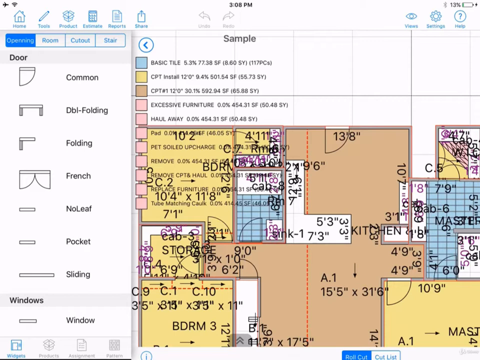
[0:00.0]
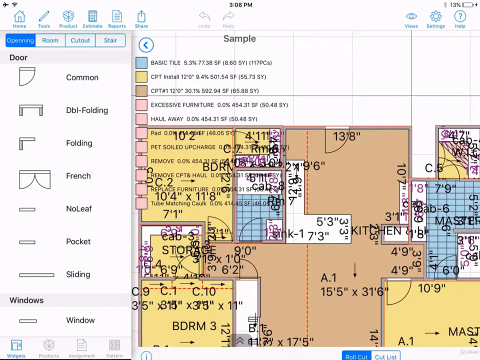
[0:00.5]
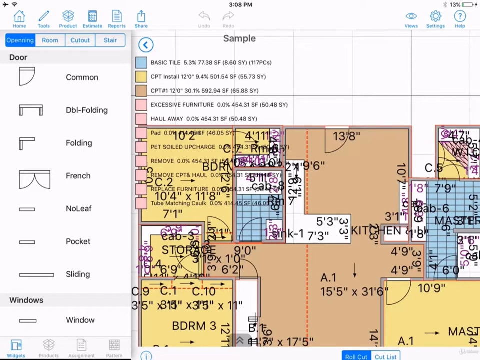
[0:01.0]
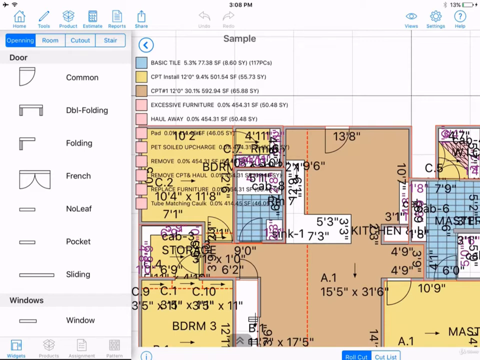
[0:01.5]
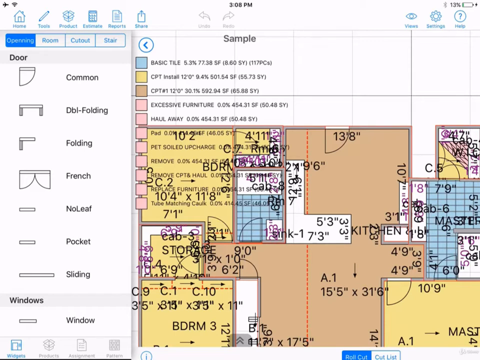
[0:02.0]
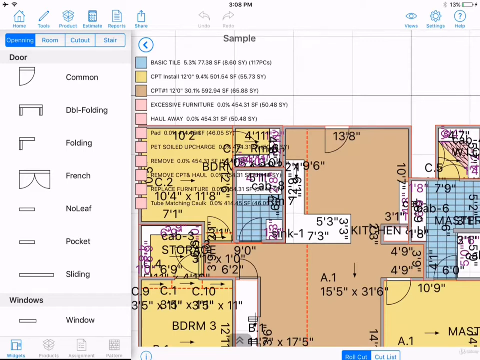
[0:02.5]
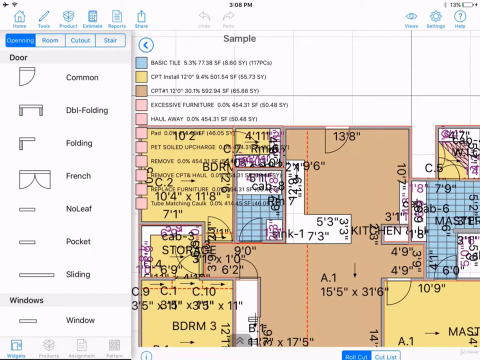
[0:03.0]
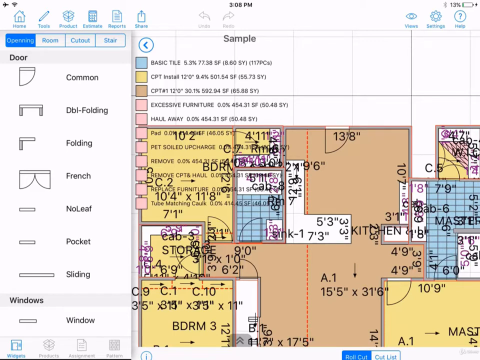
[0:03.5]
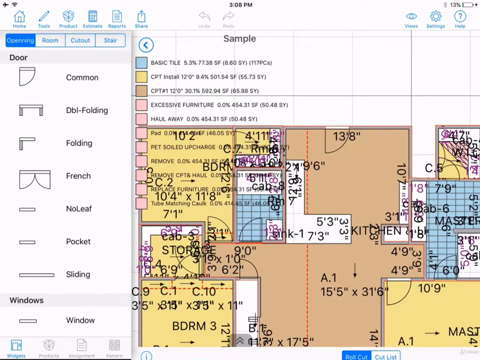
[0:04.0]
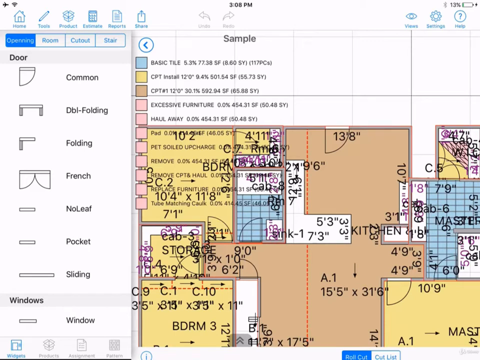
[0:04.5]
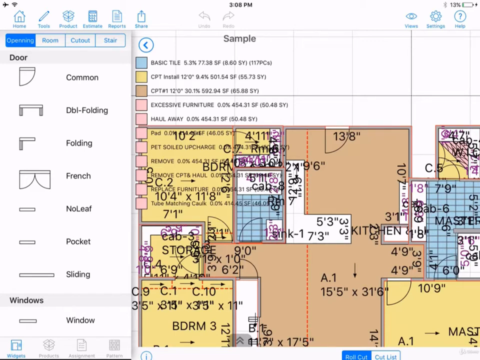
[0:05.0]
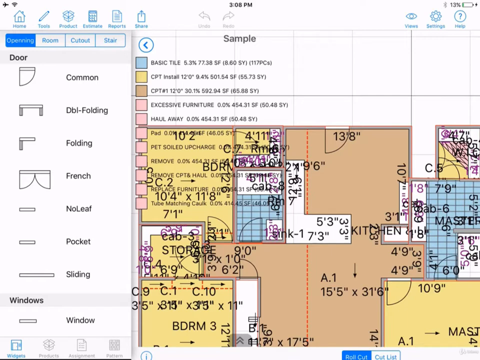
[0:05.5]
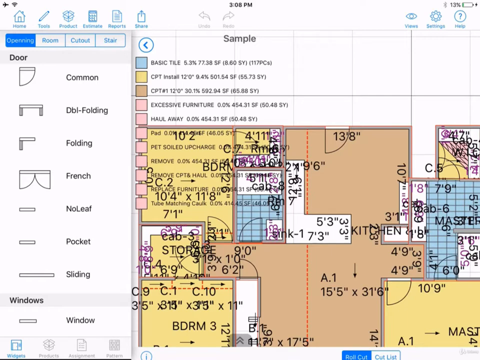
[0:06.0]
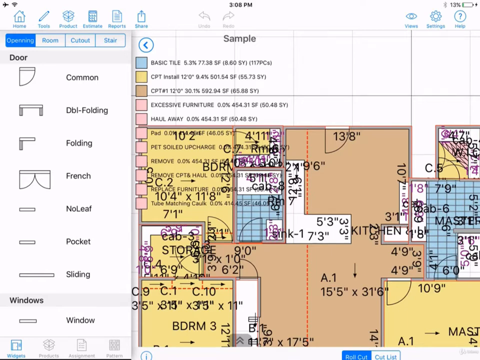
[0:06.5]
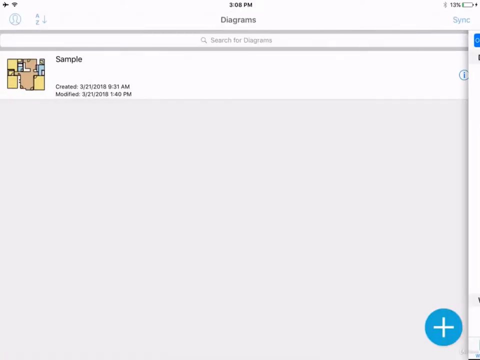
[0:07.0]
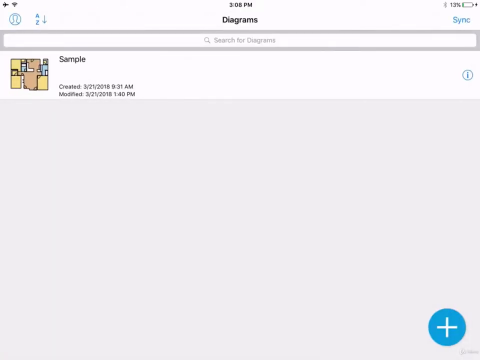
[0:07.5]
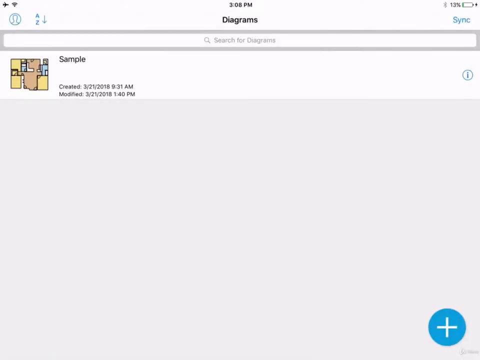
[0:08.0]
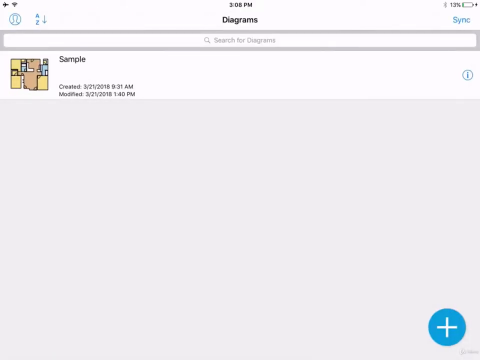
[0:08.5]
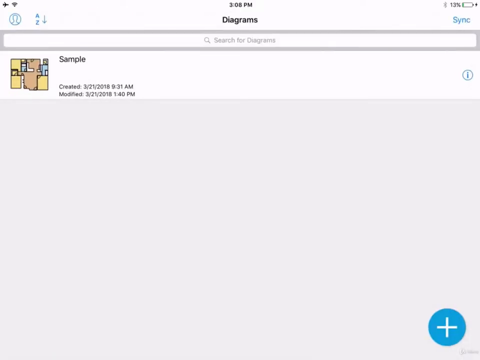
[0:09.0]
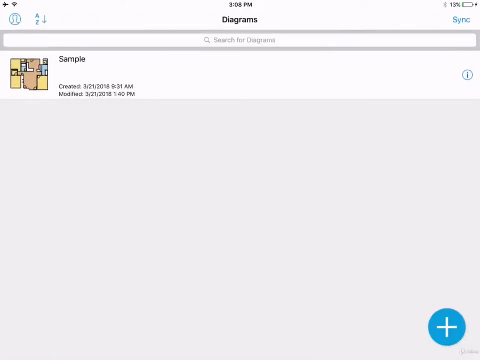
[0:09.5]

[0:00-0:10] A floor plan appears to be shown, moving back and forth. It displays the actual floor plan with measurements included, along with a small scale window explaining symbols for windows such as double folding, folding French, pocket, and sliding. The view moves to a sample screen and then back to the floor plan. Different colors stand for different things: blue means basic tile, yellow is CPT install, brown is CPT with different numbers, and pink is excessive furniture. A building with a sample floor plan appears to be shown, but the view quickly returns to the original floor plan. Across the top are the options home, tools, product, estimate, reports, and share. It appears to be a program for building or choosing a house.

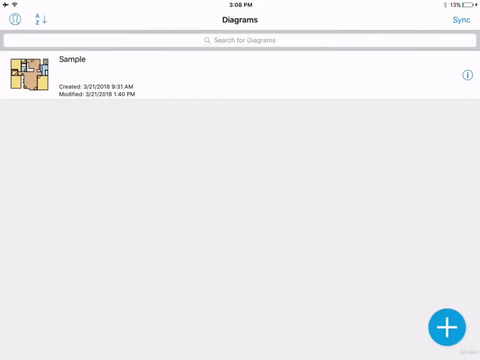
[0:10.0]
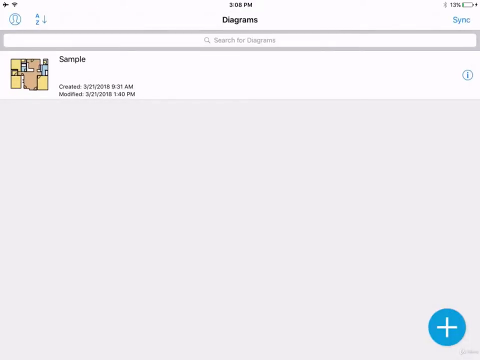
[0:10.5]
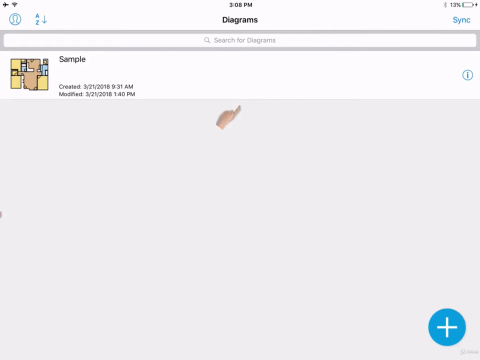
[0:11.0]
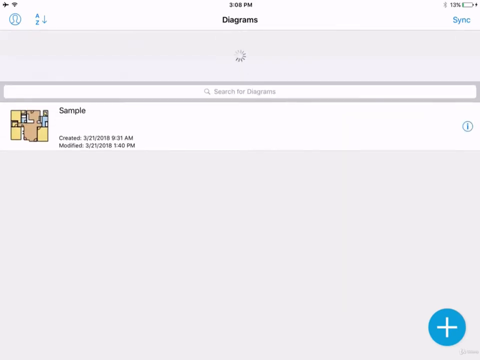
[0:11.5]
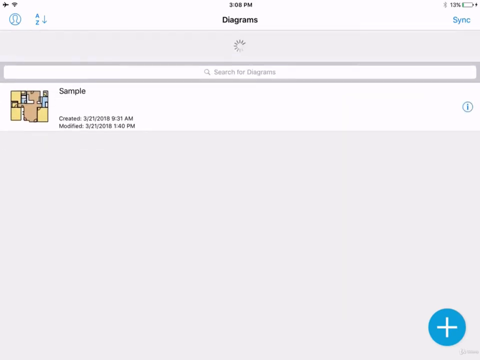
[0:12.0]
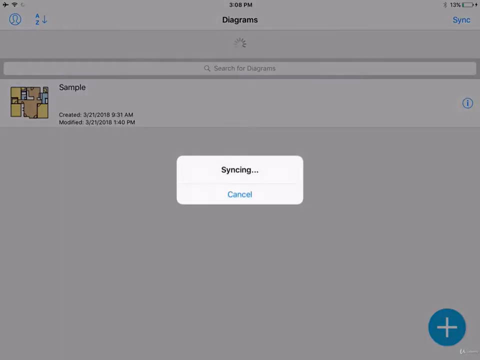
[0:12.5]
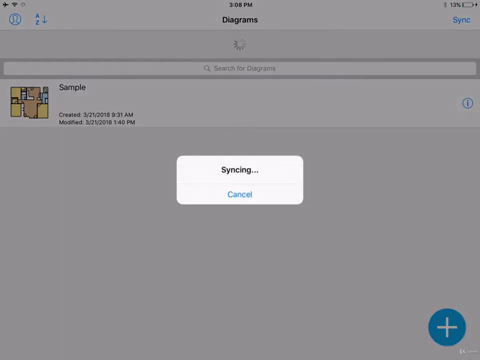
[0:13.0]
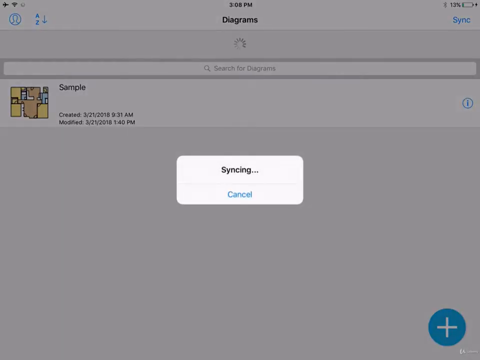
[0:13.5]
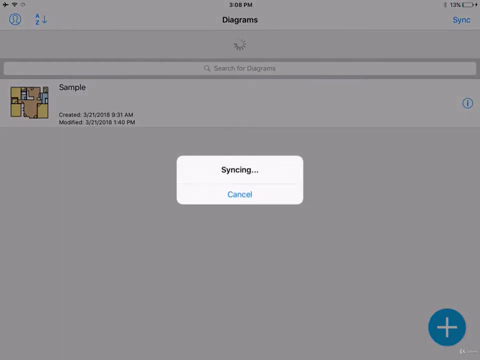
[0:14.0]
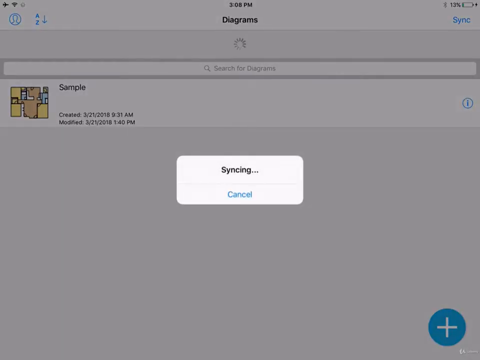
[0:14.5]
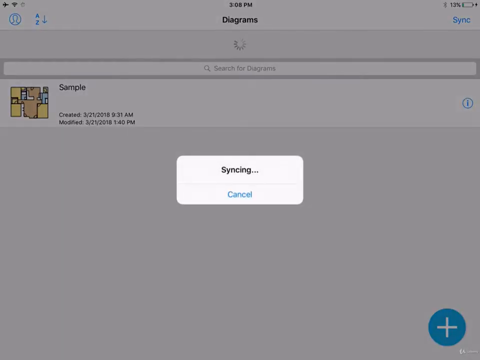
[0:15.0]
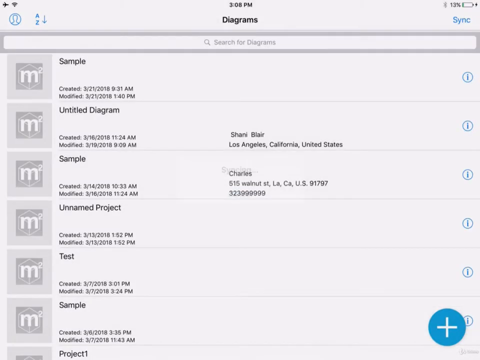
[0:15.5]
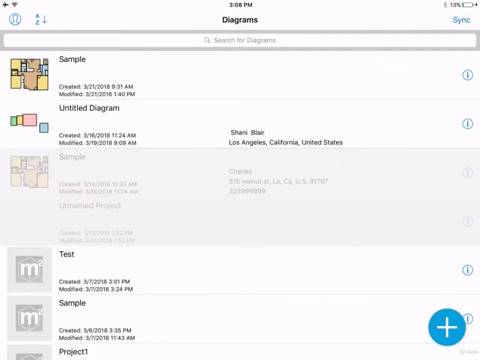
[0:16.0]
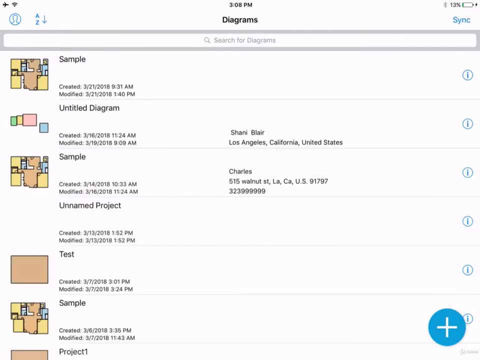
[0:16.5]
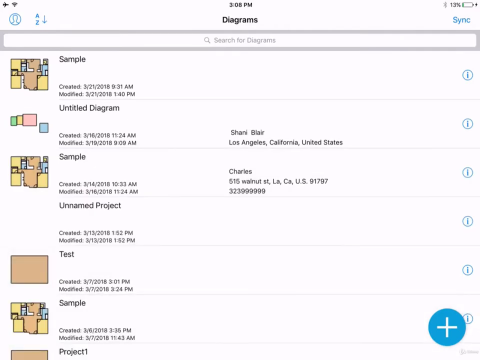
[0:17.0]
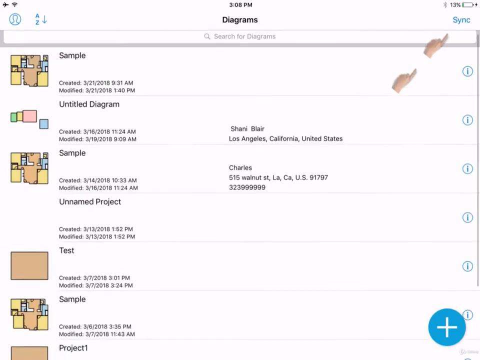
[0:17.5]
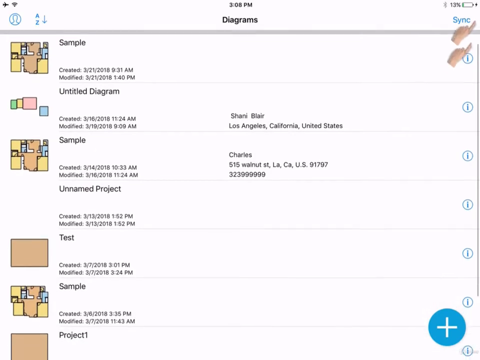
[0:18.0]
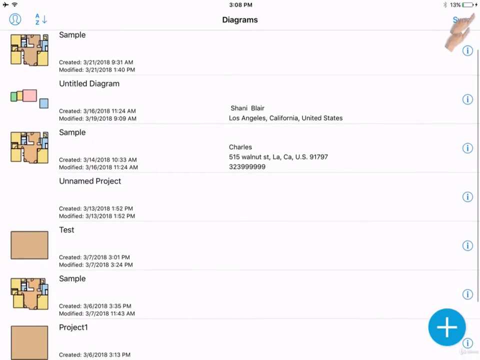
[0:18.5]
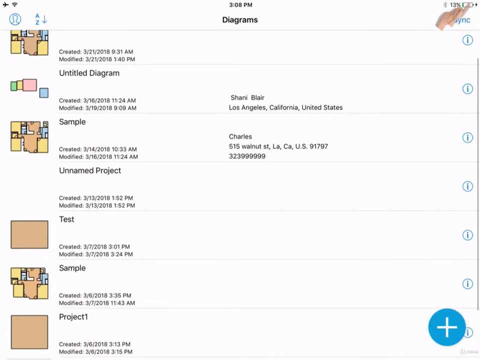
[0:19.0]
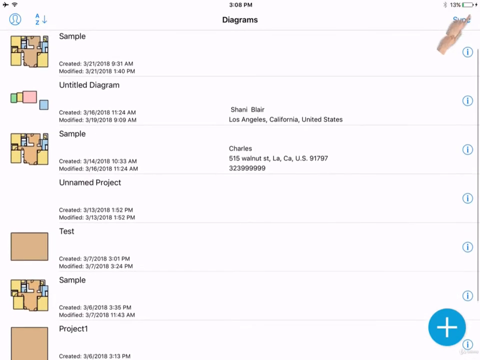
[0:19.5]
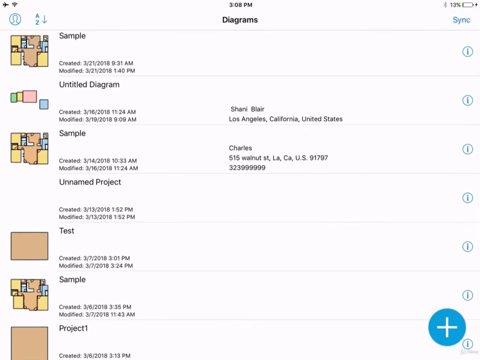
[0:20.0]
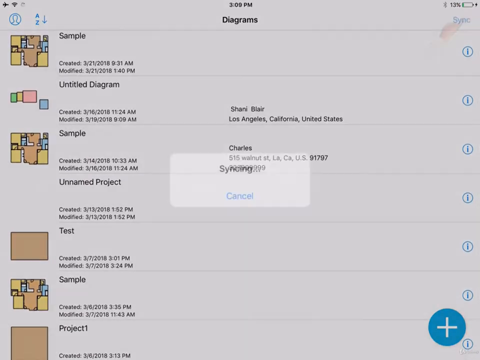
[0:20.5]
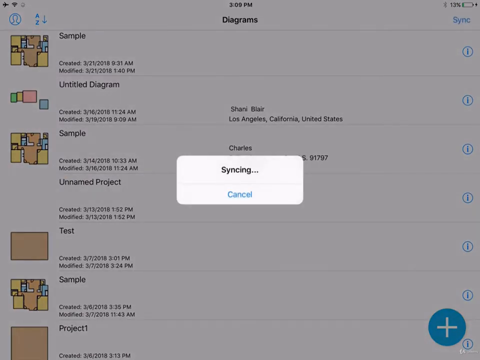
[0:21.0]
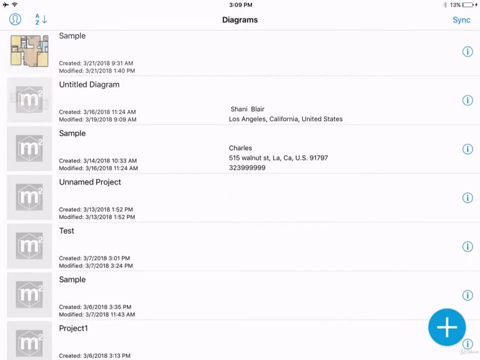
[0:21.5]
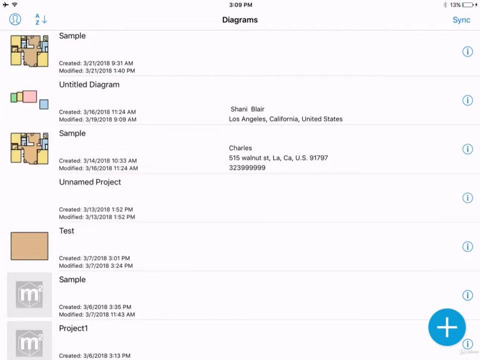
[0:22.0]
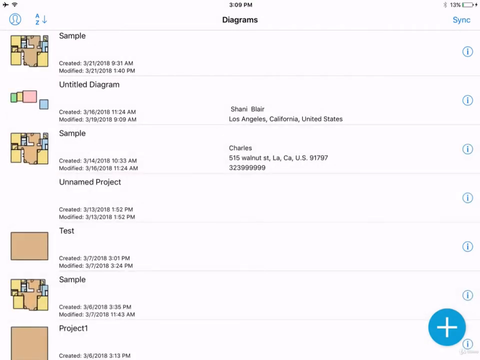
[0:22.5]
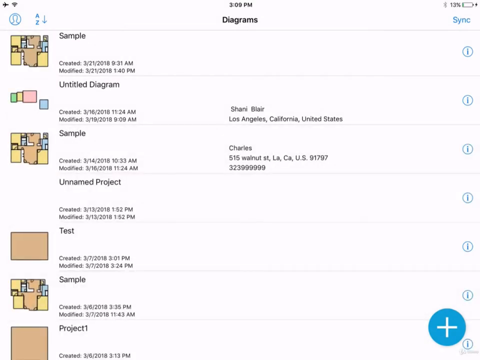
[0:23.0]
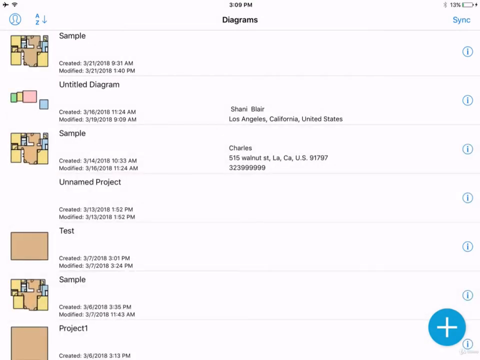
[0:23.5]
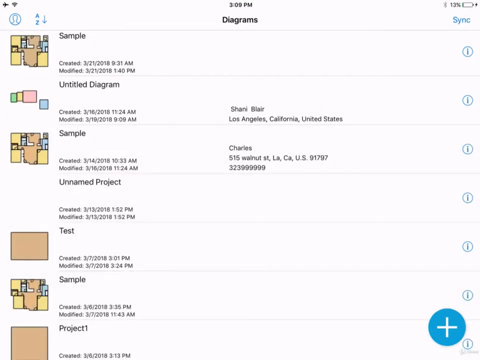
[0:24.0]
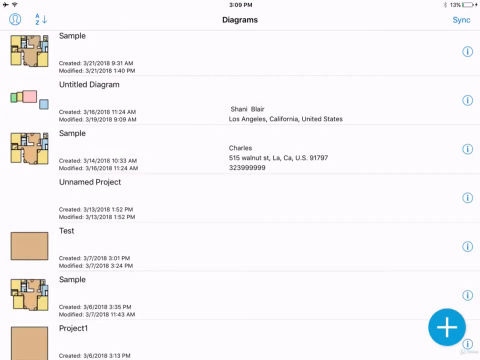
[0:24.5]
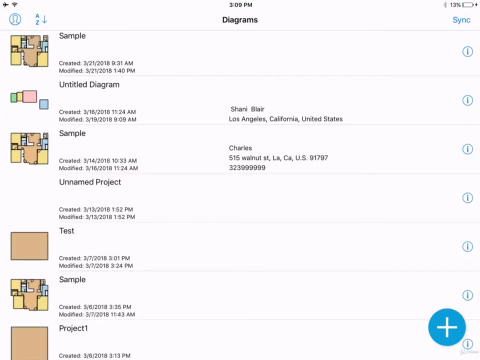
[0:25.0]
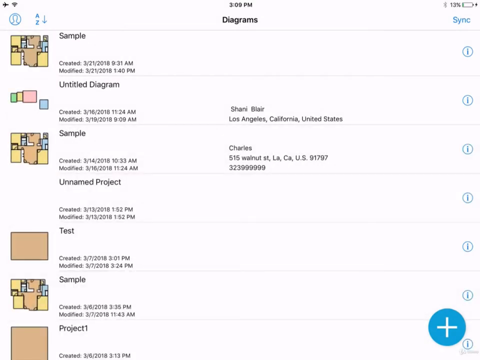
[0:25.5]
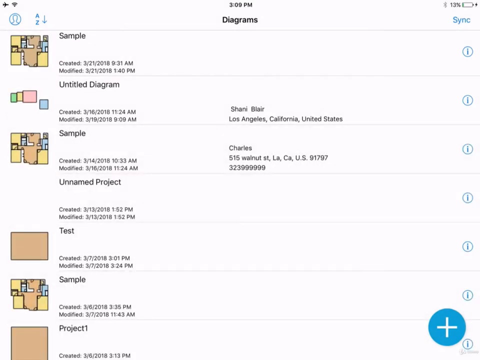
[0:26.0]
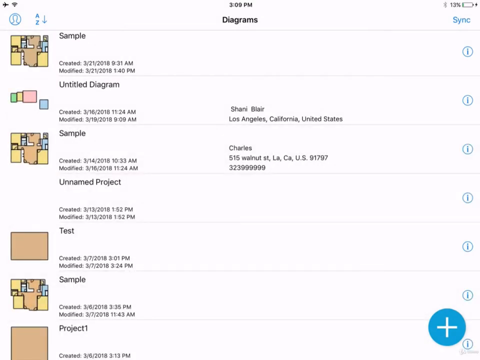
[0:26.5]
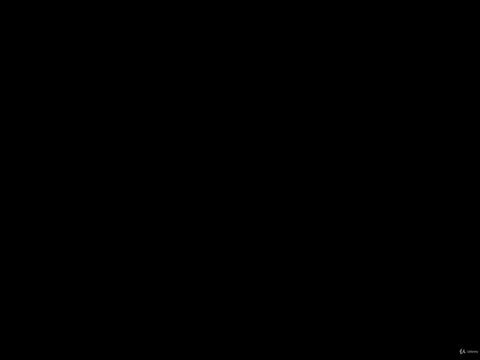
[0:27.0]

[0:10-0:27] The screen appears to be a program for floor plans for building a house, home, or building. Across the top of the screen are home, tasks, product, estimate, reports, and share, with options below to choose the opening or the room. A sample screen comes across and it syncs with something, showing sample, untitled diagram, test, and sample. There is an option for views. The sample screen on diagrams comes across the screen, and it syncs back to what it originally was. Two fingers point to the battery or the sync button. Syncing is then listed, and the display returns to the original screen. It then syncs with the next screen, which shows multiple variations of the floor plan in different colors, listed as diagrams, and it has synced.